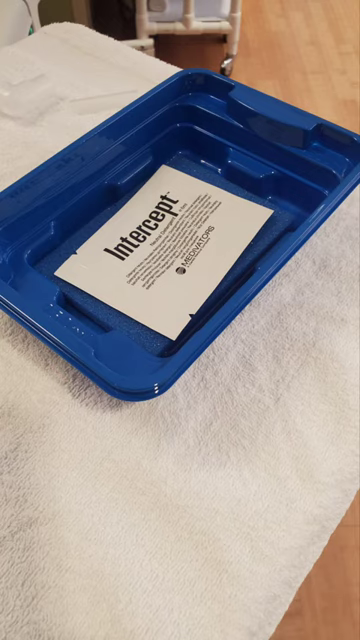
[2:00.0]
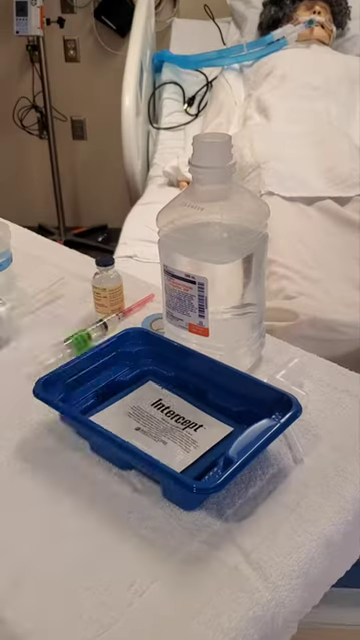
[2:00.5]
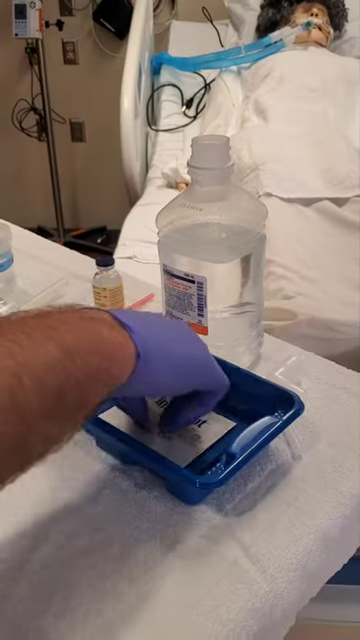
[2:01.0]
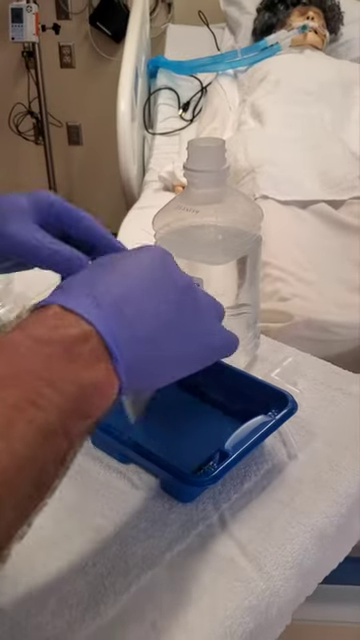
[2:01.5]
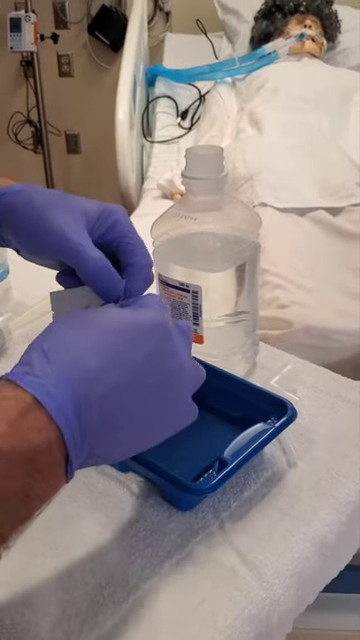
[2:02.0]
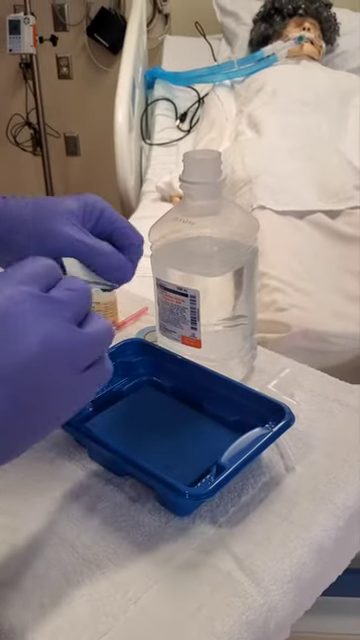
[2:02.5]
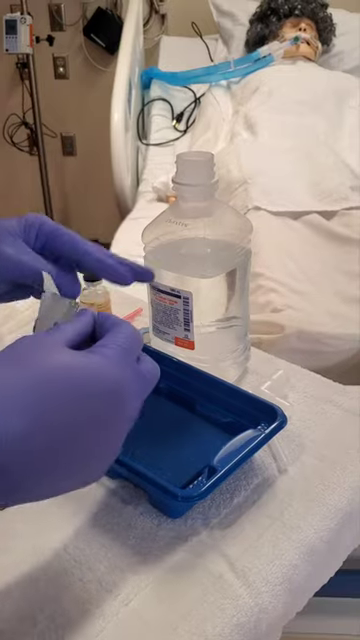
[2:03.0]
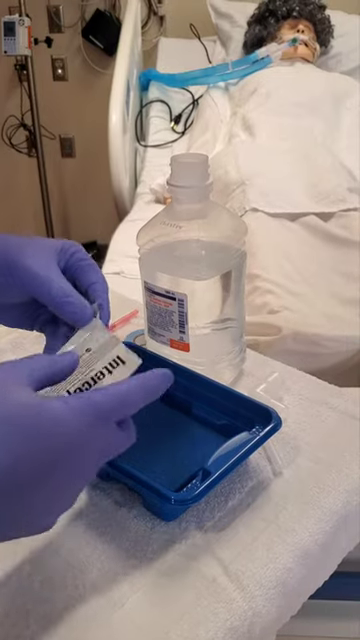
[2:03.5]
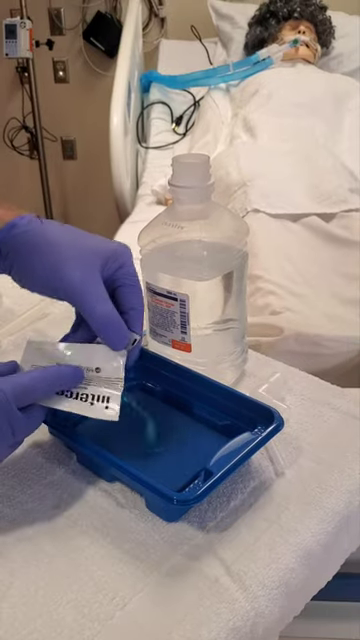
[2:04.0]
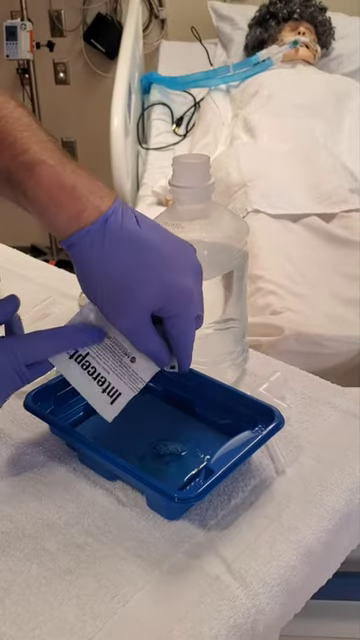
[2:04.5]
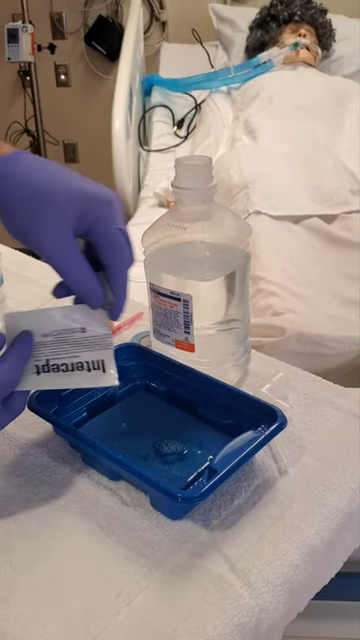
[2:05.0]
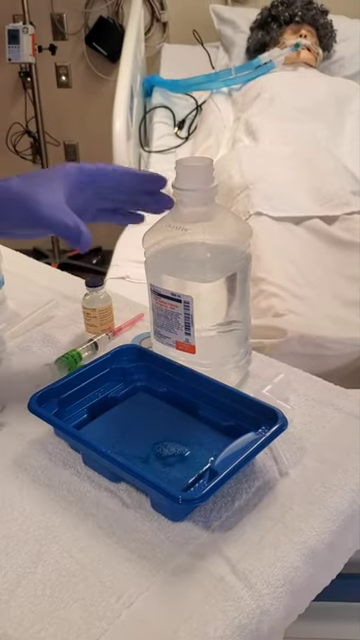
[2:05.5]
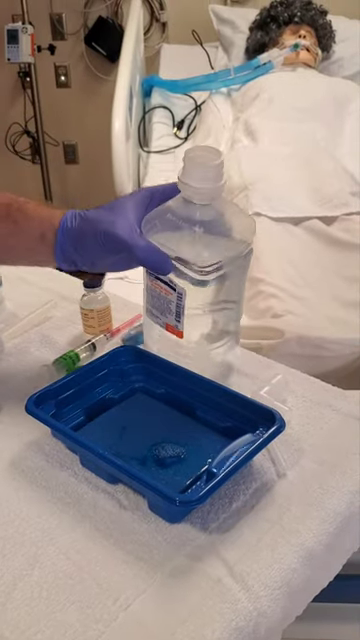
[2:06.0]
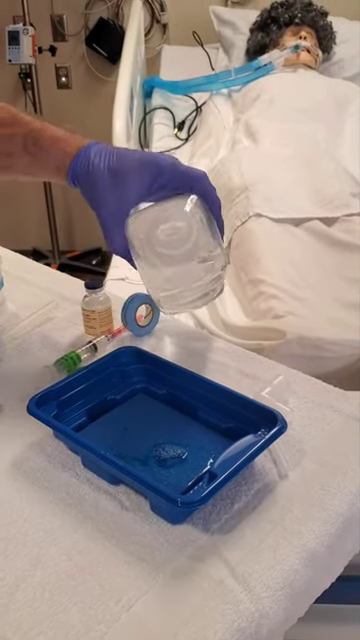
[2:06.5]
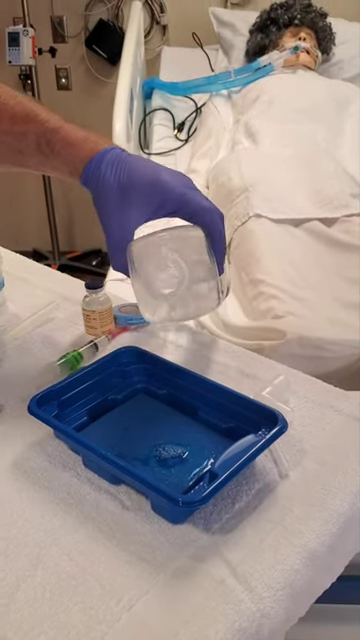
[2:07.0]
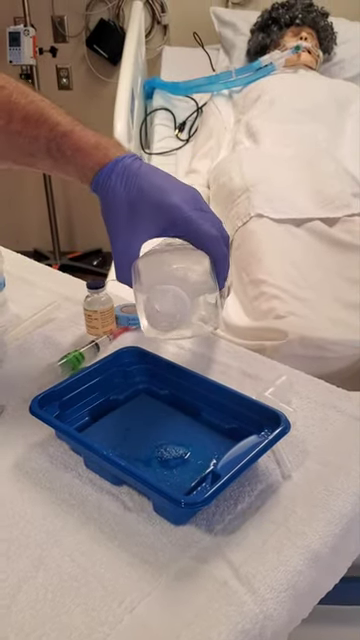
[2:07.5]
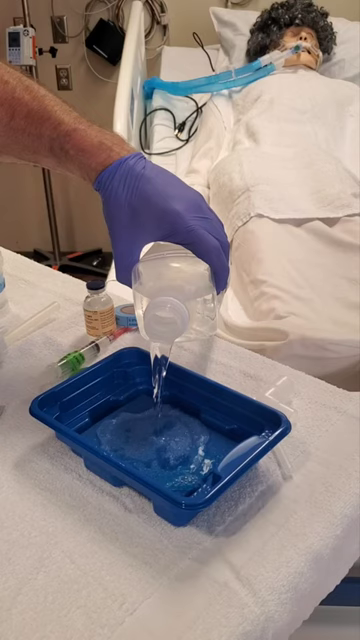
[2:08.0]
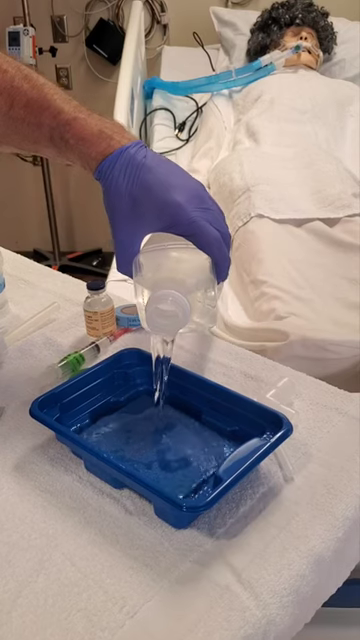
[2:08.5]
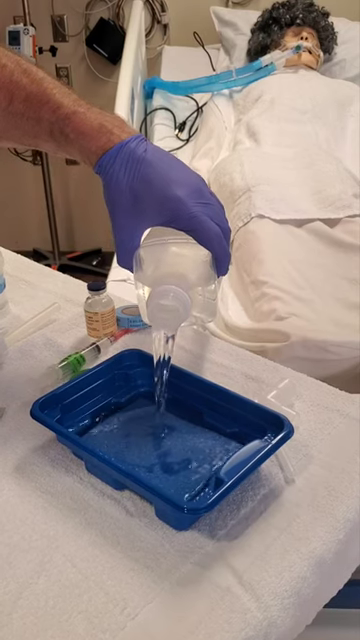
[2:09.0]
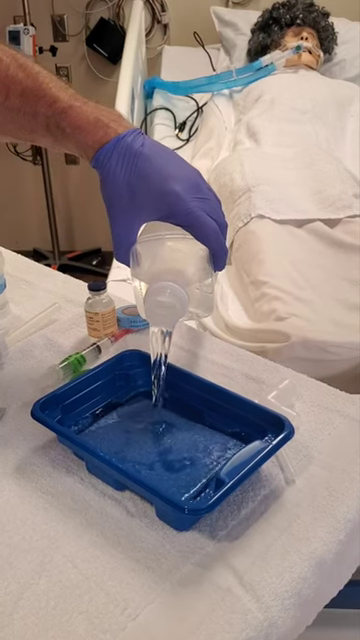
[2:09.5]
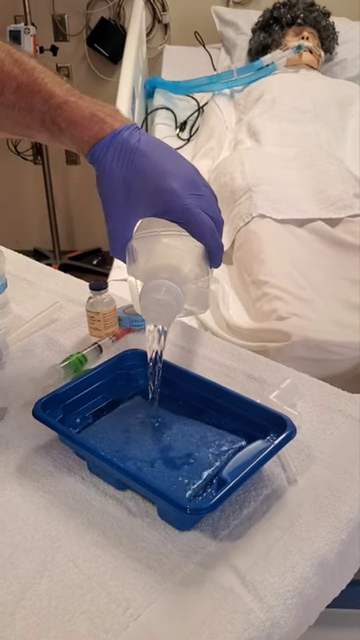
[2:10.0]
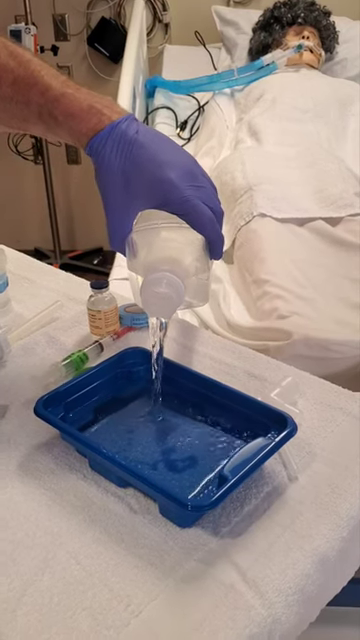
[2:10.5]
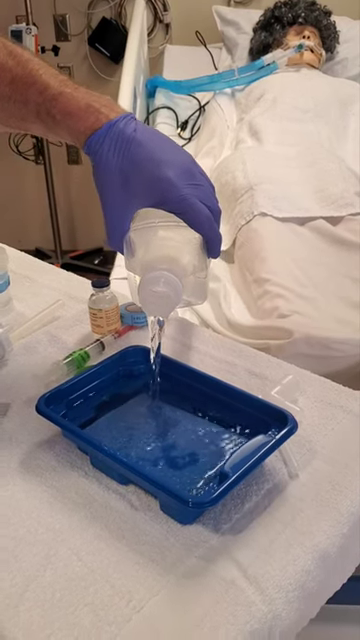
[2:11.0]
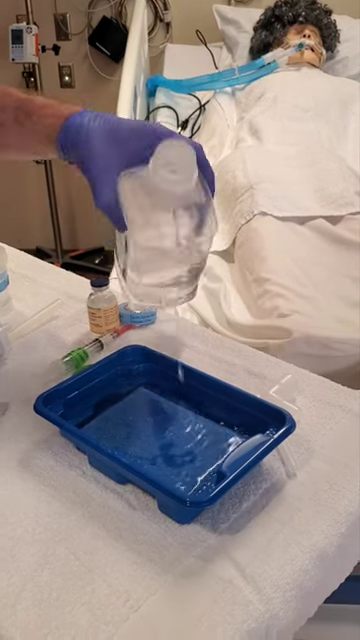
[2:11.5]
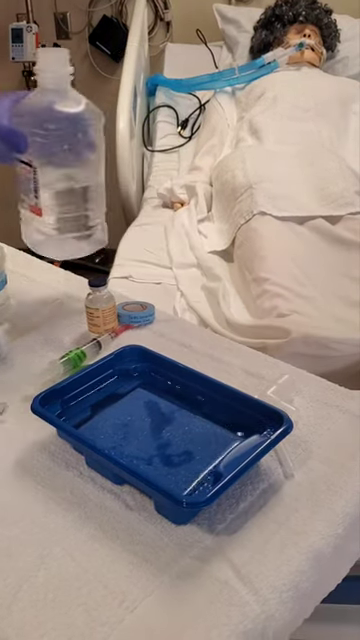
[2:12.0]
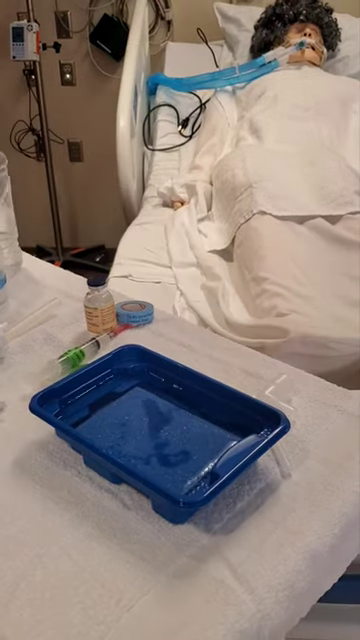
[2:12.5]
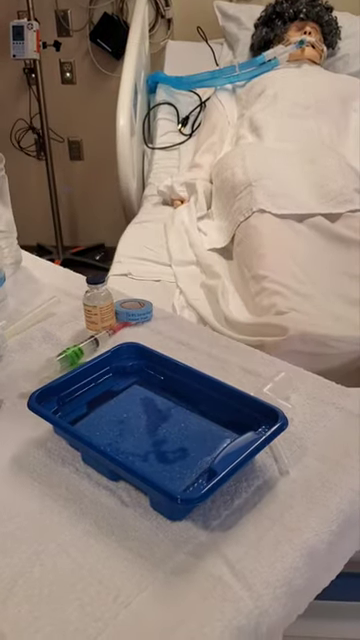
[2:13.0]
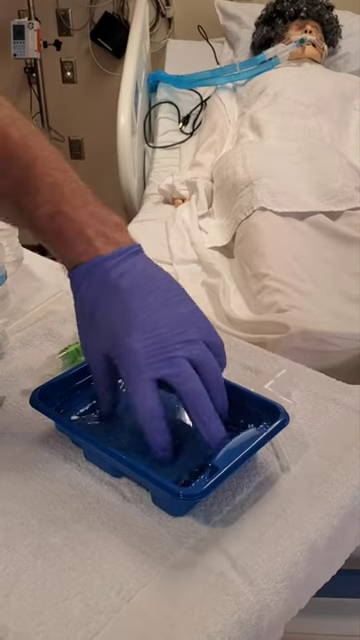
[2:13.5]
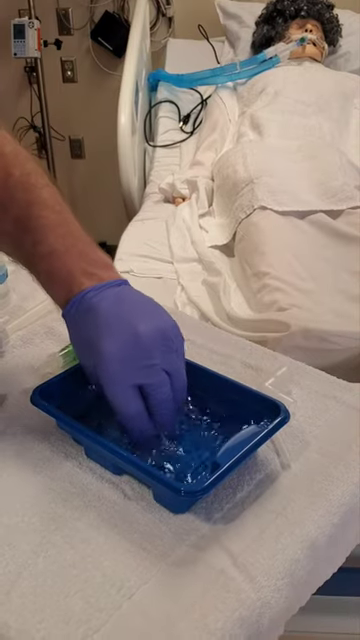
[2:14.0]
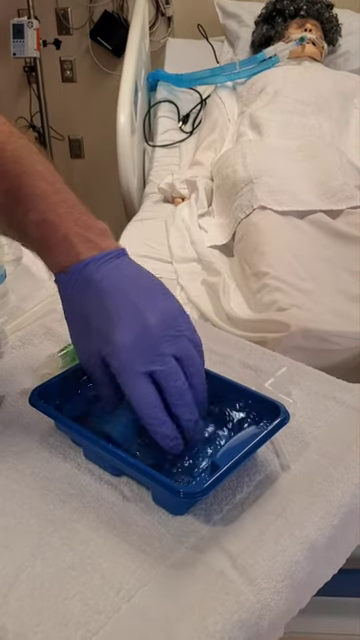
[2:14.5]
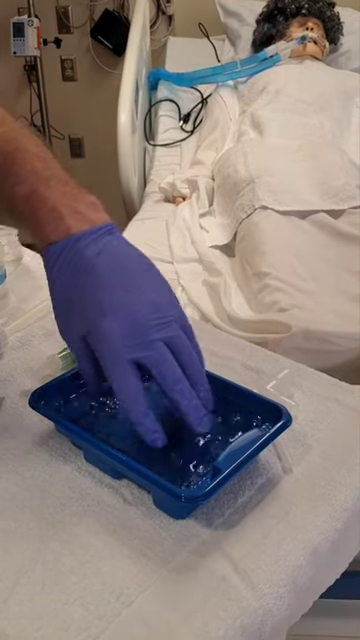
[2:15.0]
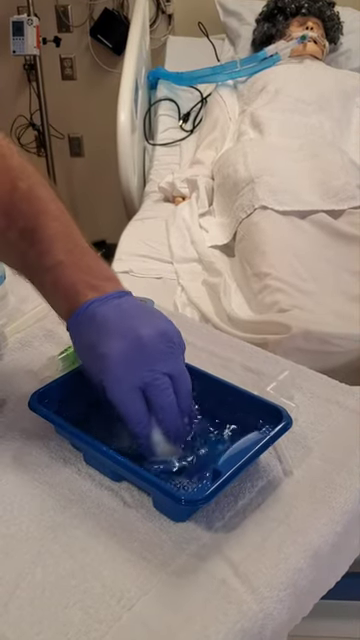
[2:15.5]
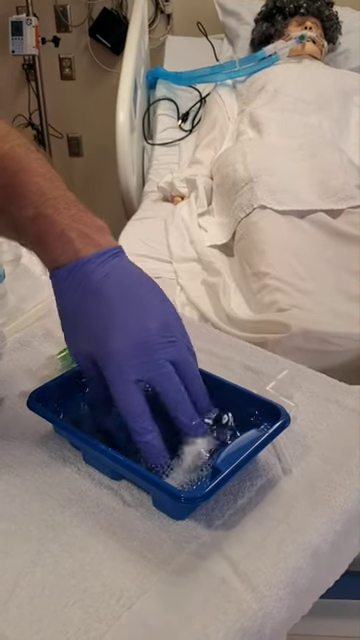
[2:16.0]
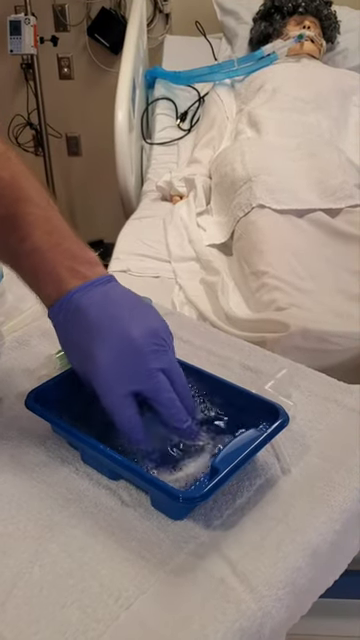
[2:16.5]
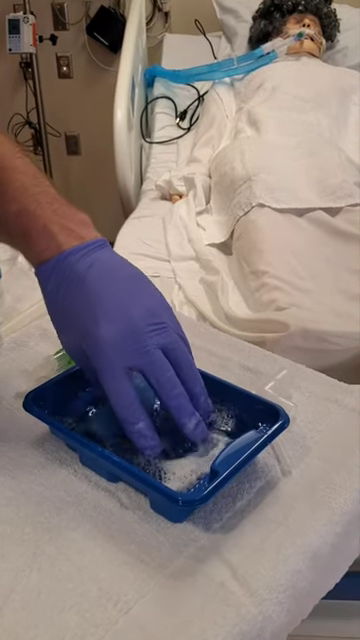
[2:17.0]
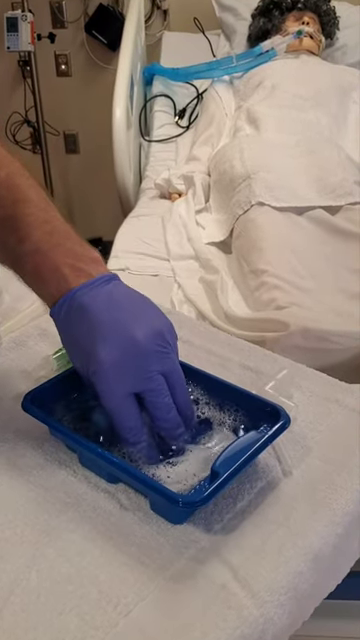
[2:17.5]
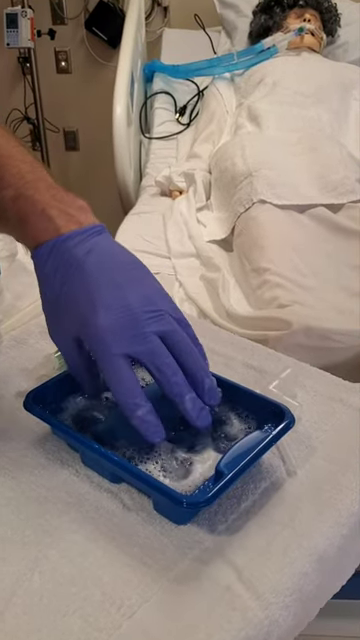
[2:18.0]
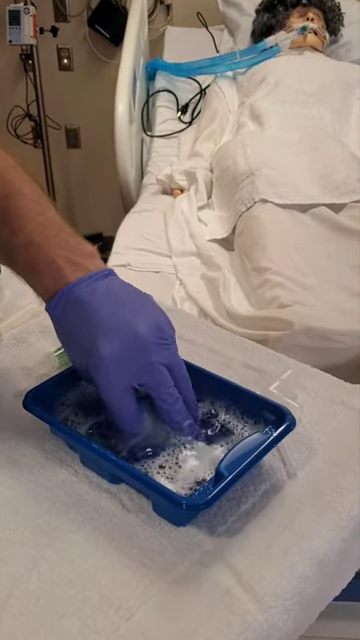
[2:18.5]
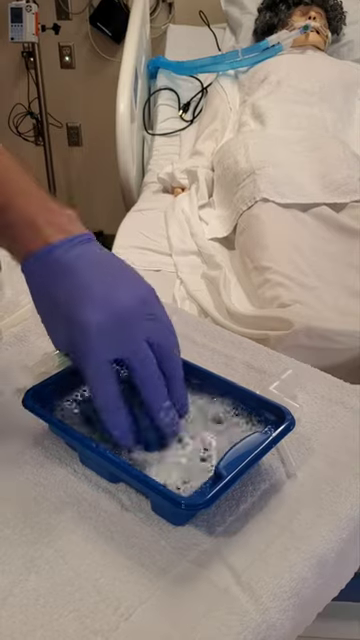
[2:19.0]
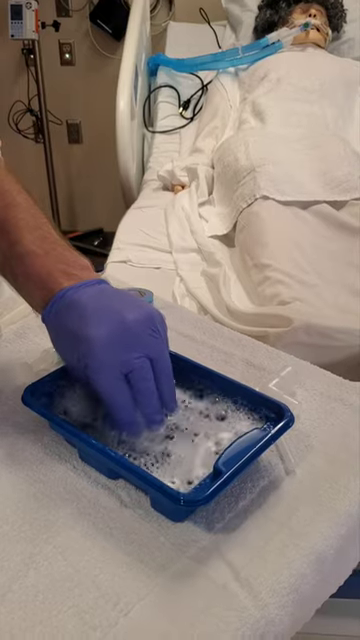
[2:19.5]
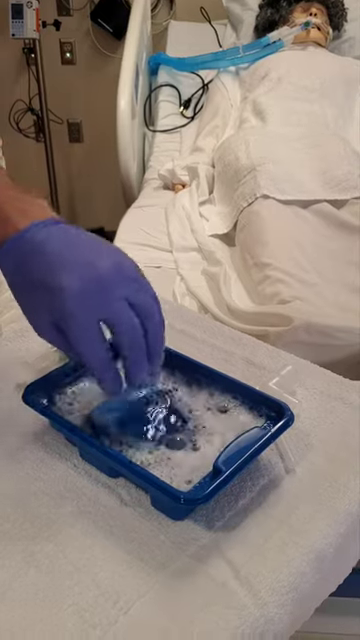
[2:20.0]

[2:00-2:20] The focus is on the small blue tray, and what looked like paper is actually some type of pouch labeled "Intercept." The person doing the procedure tears open the pouch and pours the solution into the tray, and also pours in what looks like saline water. A sponge is at the bottom of the tray. The person squeezes the sponge, and a soapy texture starts to form, possibly as a way of cleaning the camera with the sponge to disinfect it between patients. The person pouring the contents is not really shown; mainly their hands are visible.